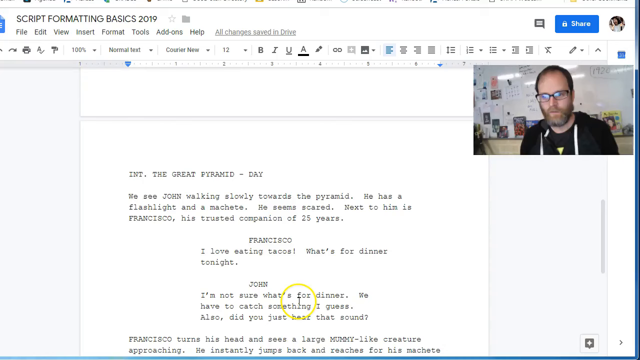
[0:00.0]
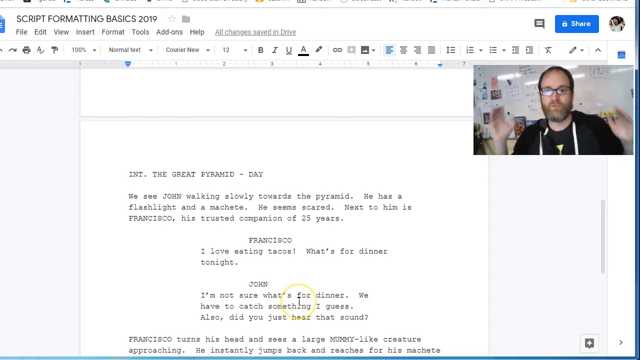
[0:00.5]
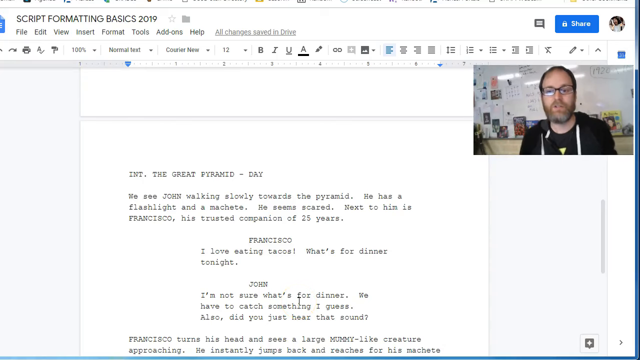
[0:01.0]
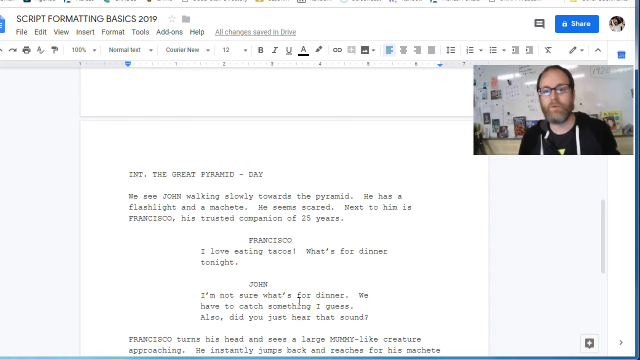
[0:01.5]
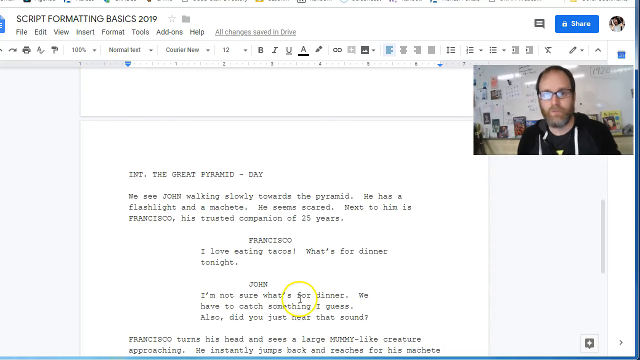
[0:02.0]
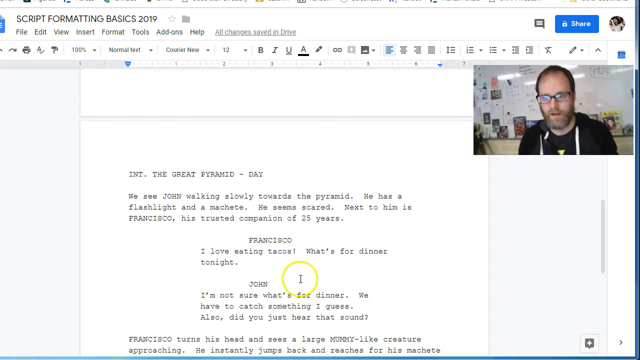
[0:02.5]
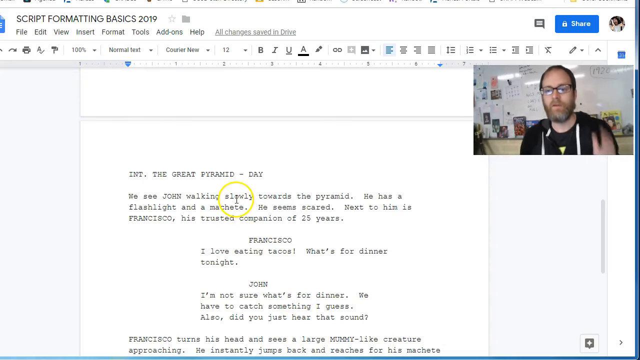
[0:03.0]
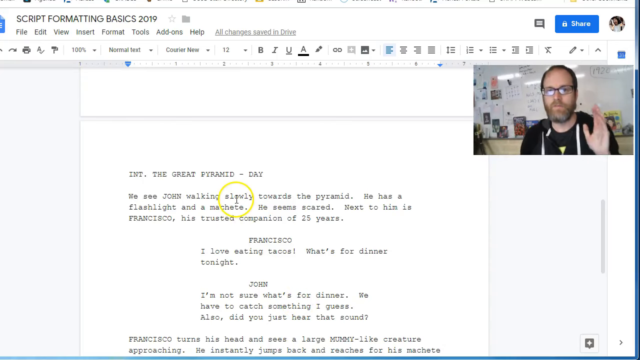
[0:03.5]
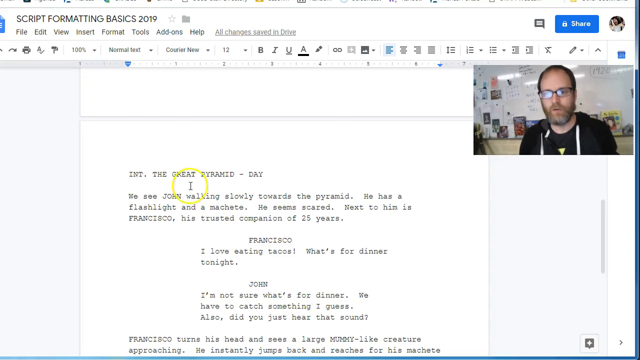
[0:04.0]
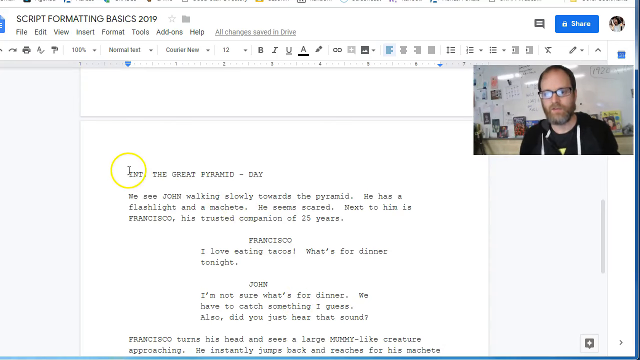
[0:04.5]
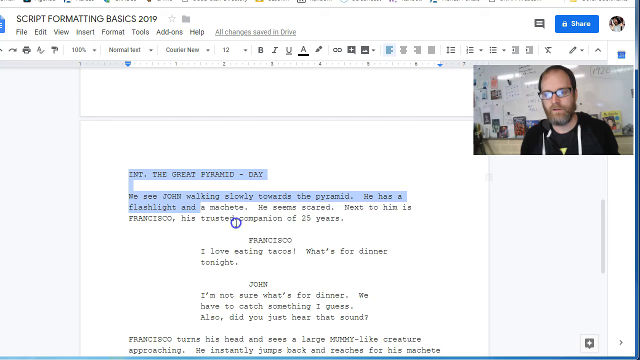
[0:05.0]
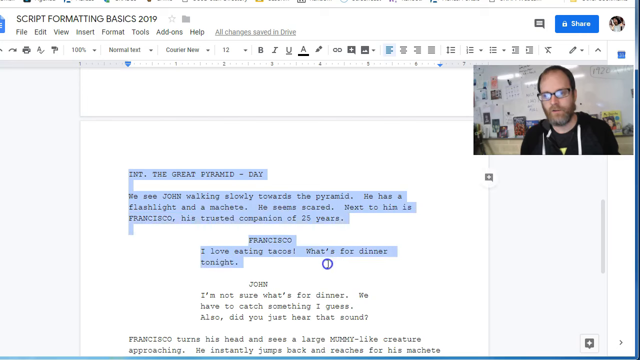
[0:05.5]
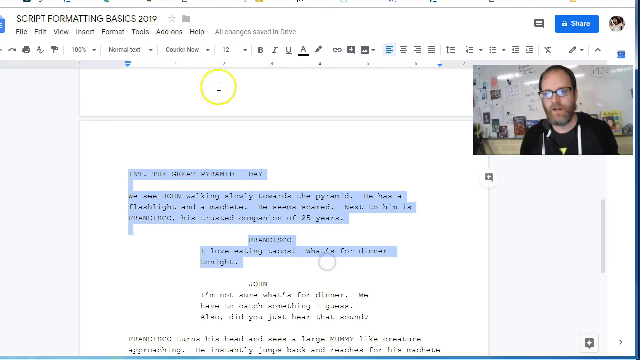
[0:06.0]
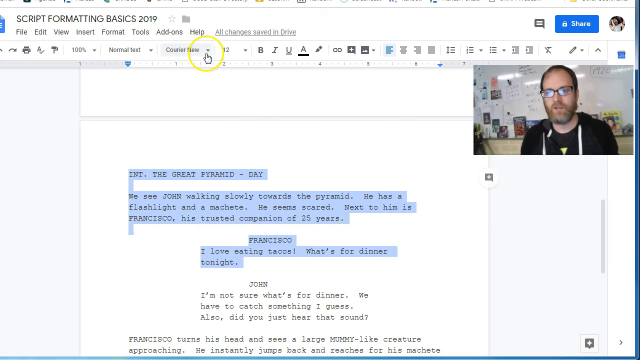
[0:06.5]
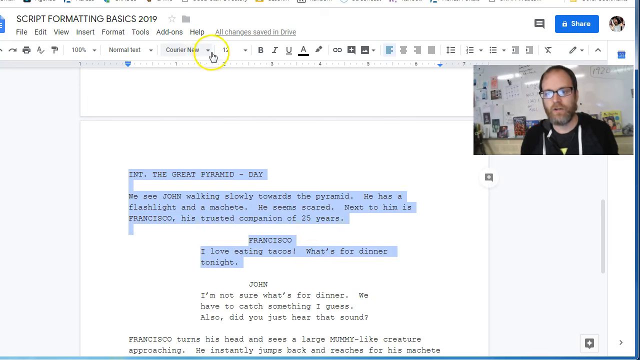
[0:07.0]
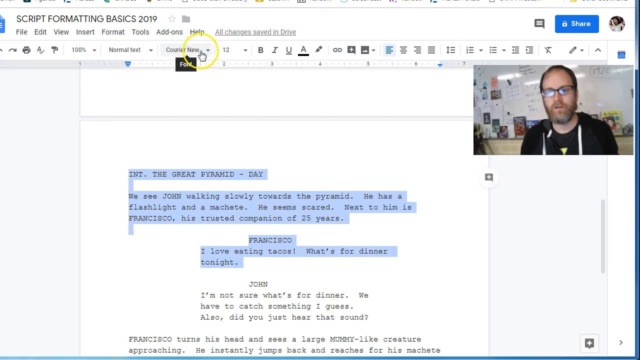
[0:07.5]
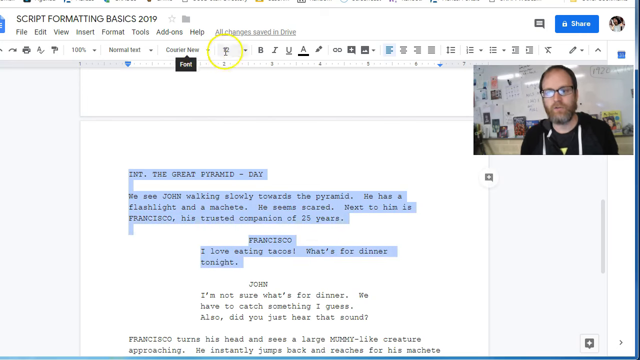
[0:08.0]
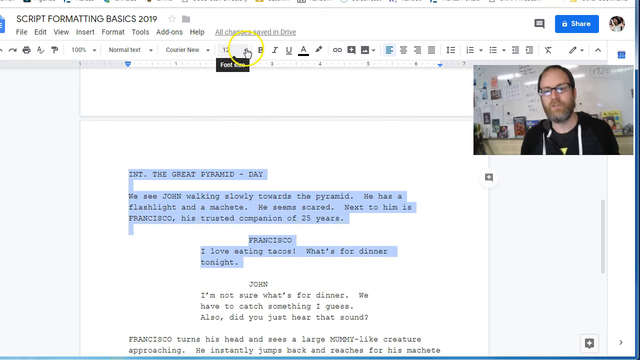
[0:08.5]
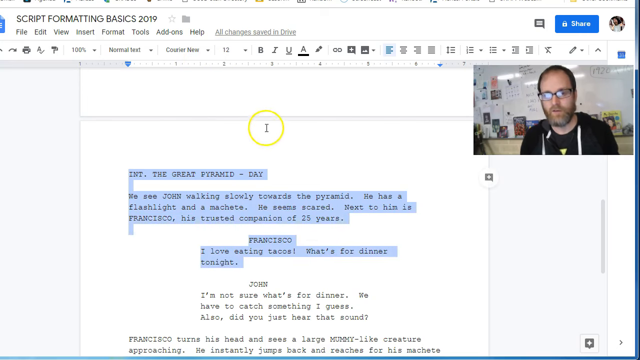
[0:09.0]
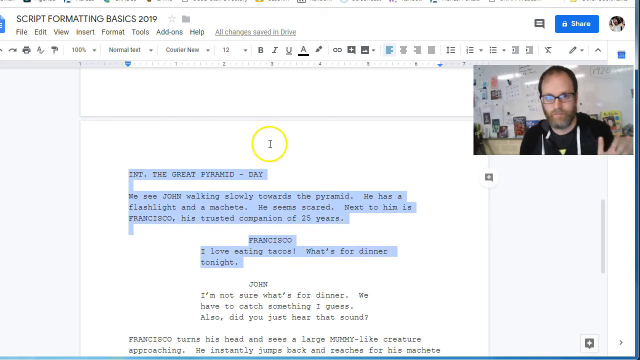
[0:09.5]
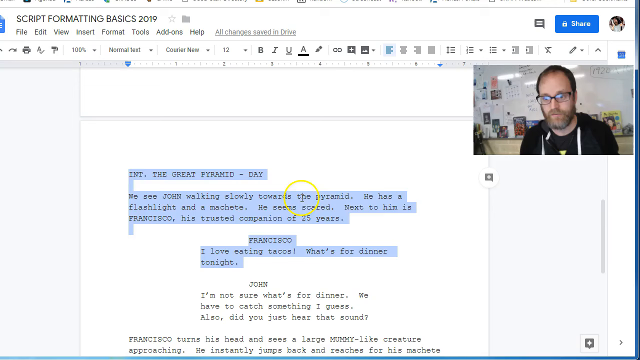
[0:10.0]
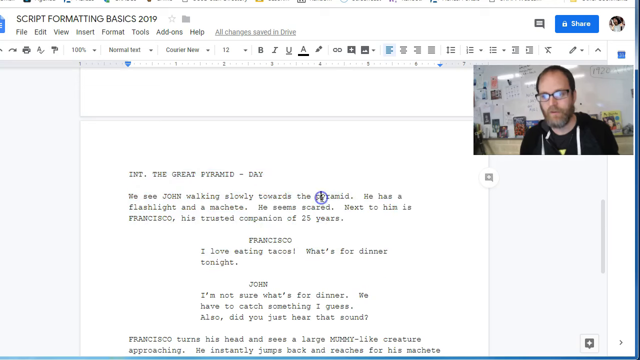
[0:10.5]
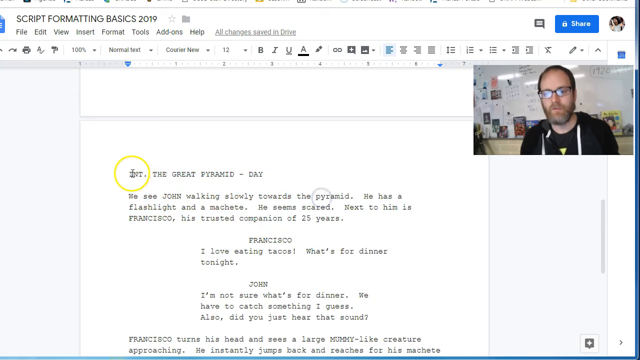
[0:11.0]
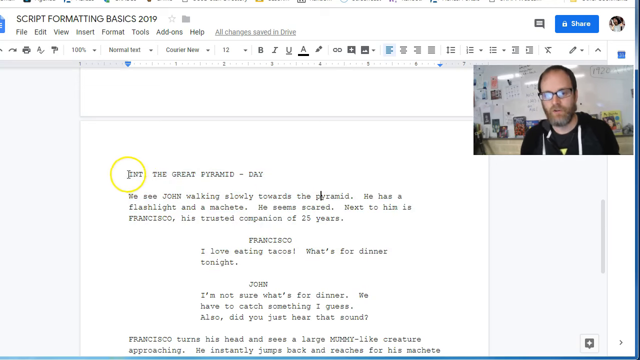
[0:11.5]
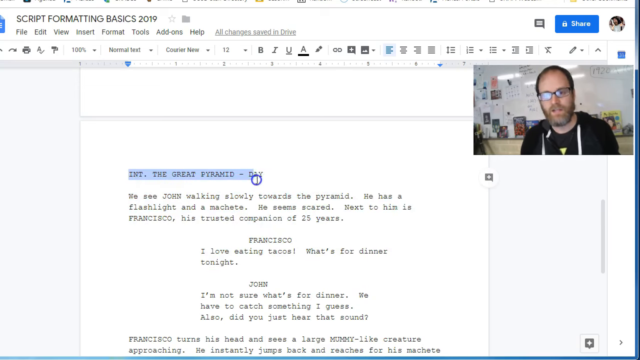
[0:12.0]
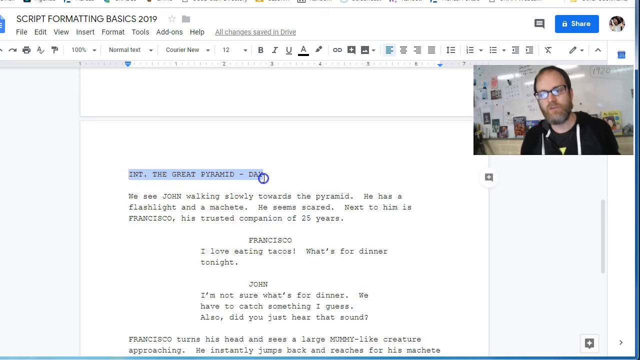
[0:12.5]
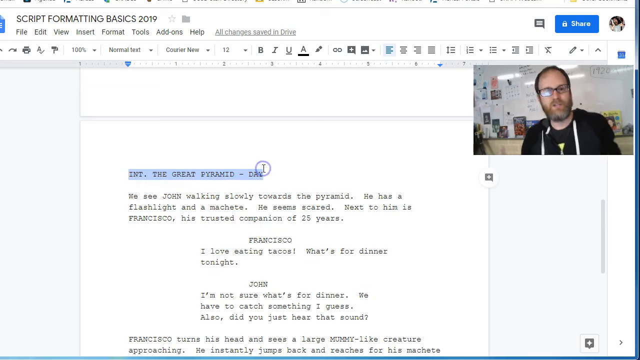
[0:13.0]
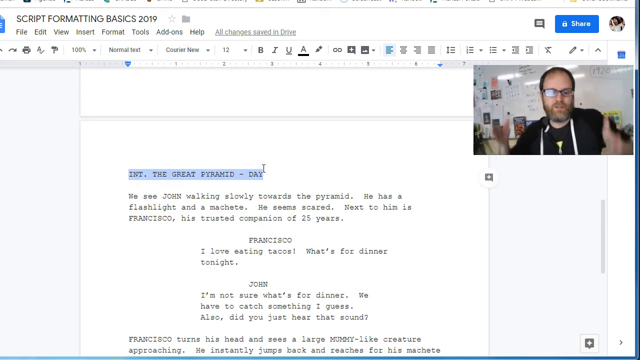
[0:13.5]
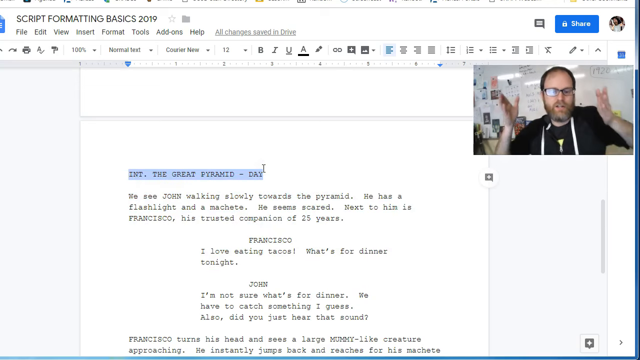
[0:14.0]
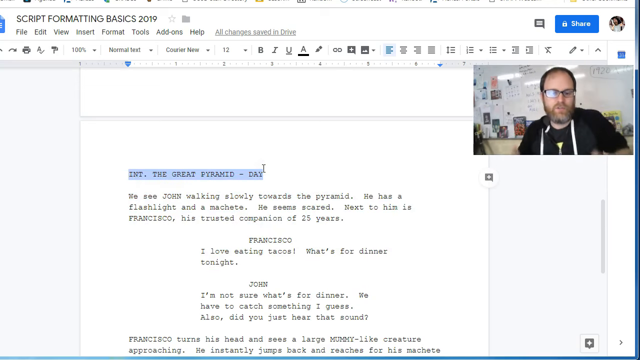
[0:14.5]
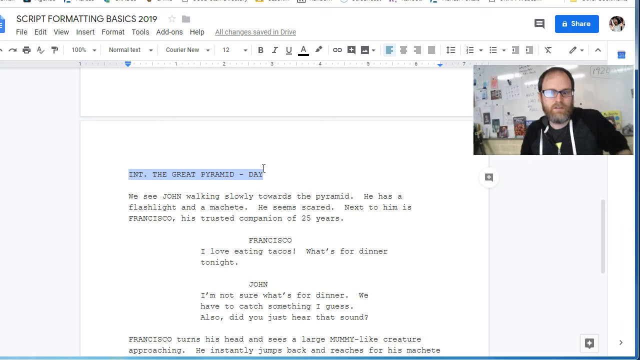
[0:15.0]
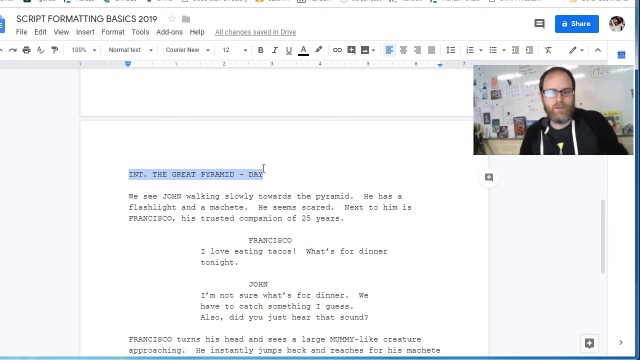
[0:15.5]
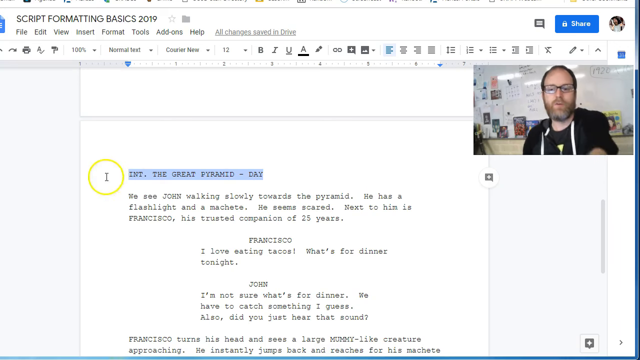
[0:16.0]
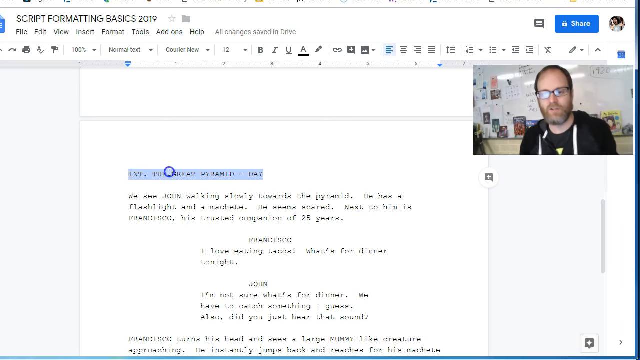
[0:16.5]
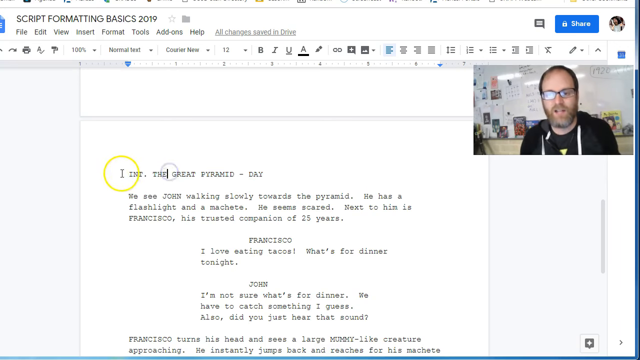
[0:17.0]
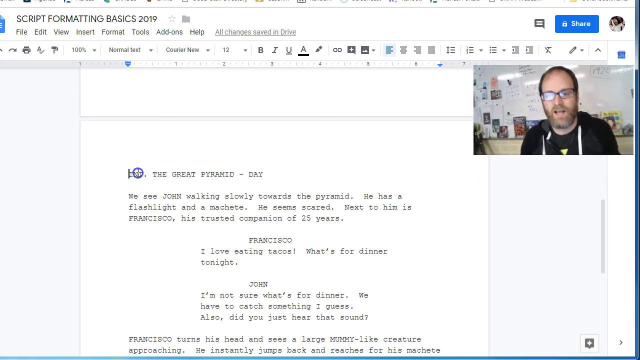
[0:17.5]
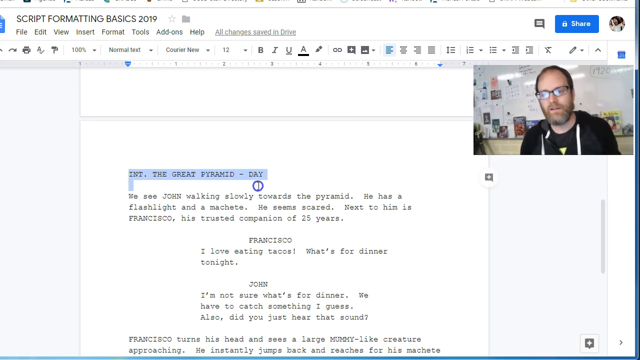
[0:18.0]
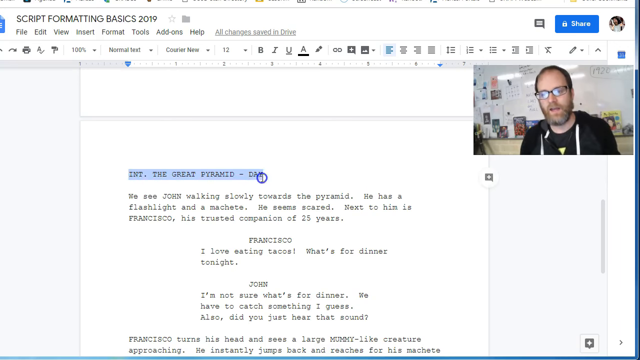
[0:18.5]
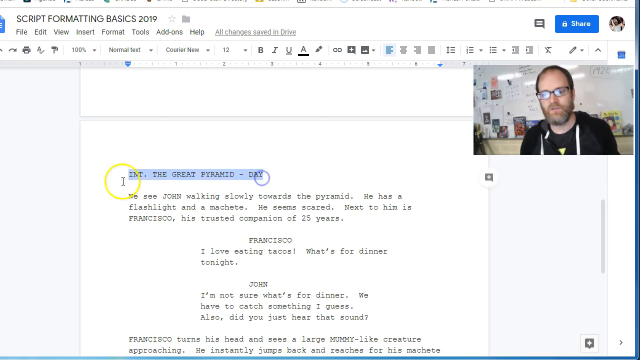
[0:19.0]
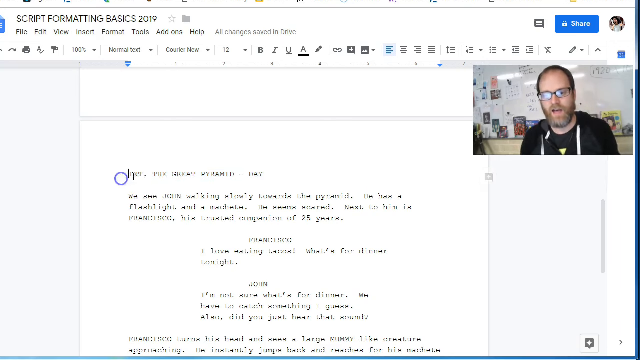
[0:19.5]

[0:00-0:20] A Word document titled "Script Formatting Basics 2019" is open, in what looks like the Word program, with a small blue document icon to the left of the title. Beneath the title are File, Edit, View and a few other menus, along with back and forward buttons, a printer icon, a zoom drop-down, "Normal text", and drop-downs for the font and size. At the far right is a user profile picture, with a share button to its left. The document focuses on Francisco and John and looks like some kind of story. A man appears to be doing a live webinar, possibly during COVID; he wears a black hoodie and glasses, and there is a whiteboard behind him. He may be teaching, perhaps as an English teacher teaching a student at home. The document seems to be on one of the second pages. He holds the cursor over a line about dinner, then moves it up to the section right underneath, the first block under the Great Pyramid, using his hand a little as he talks. He highlights the text from the Great Pyramid all the way down to Francisco talking, goes up to the Courier New font setting but decides not to touch it, clicks off, and highlights the Great Pyramid again, two or three times over.